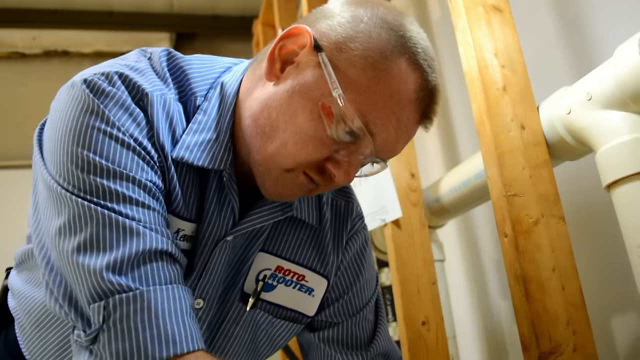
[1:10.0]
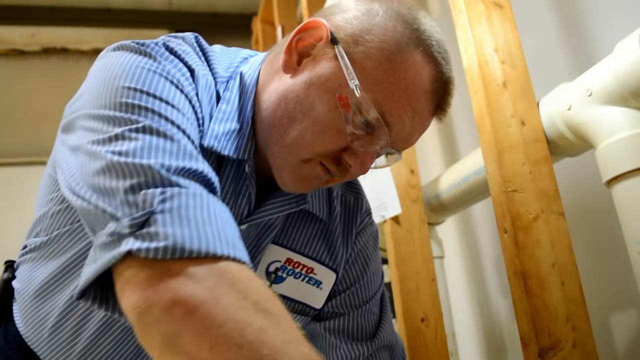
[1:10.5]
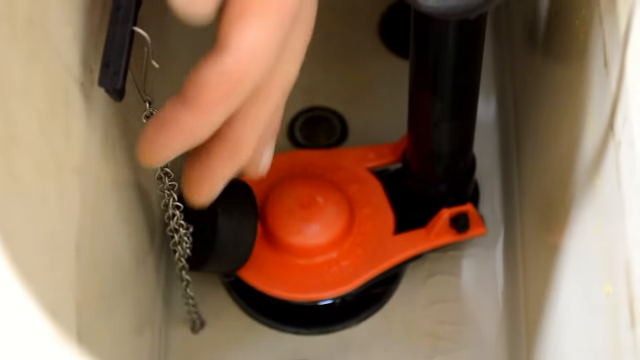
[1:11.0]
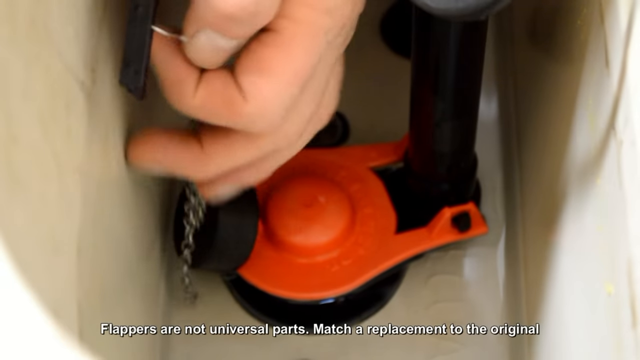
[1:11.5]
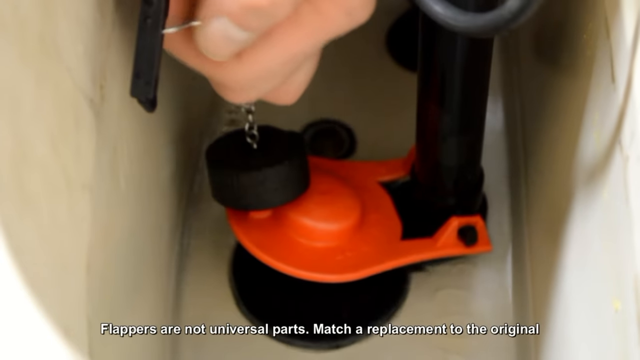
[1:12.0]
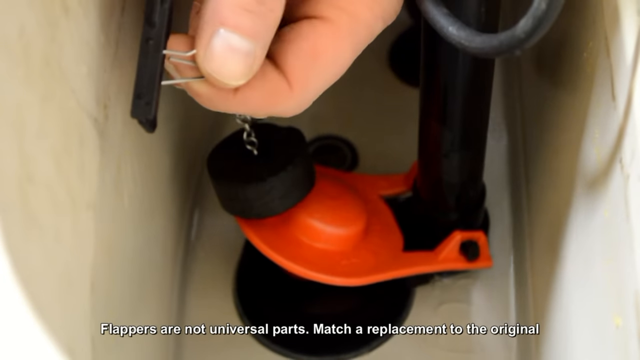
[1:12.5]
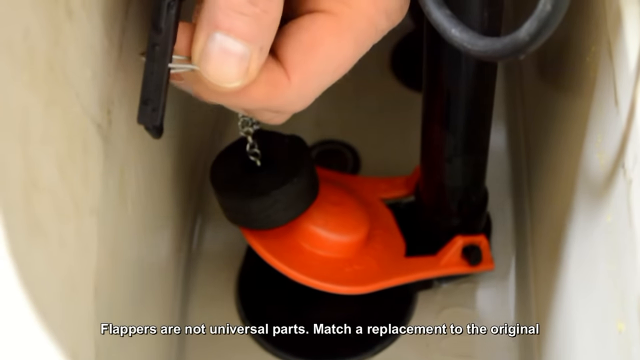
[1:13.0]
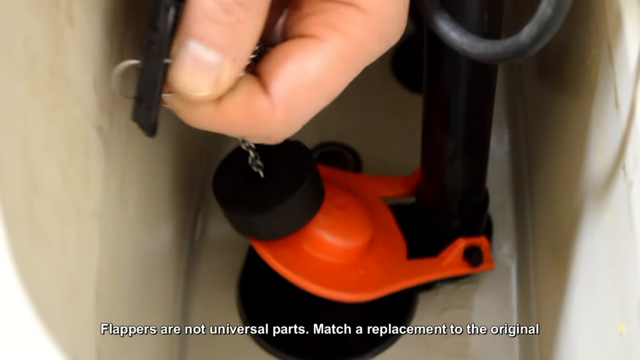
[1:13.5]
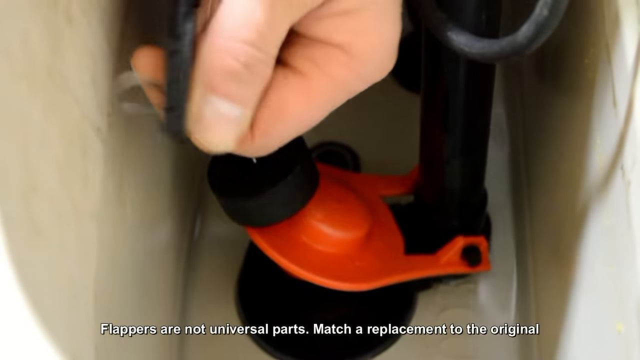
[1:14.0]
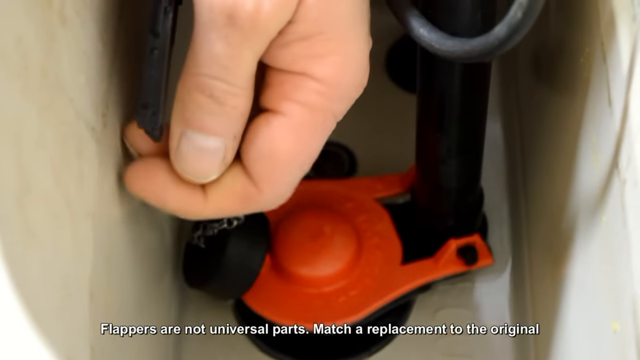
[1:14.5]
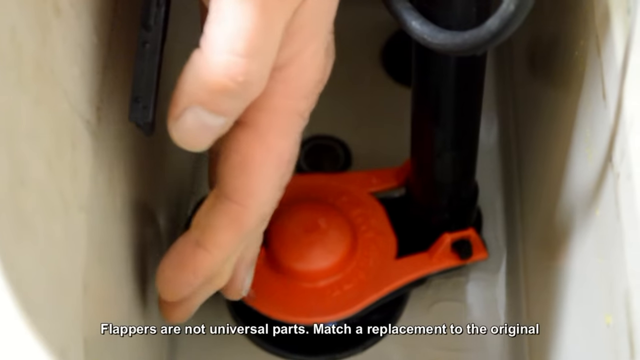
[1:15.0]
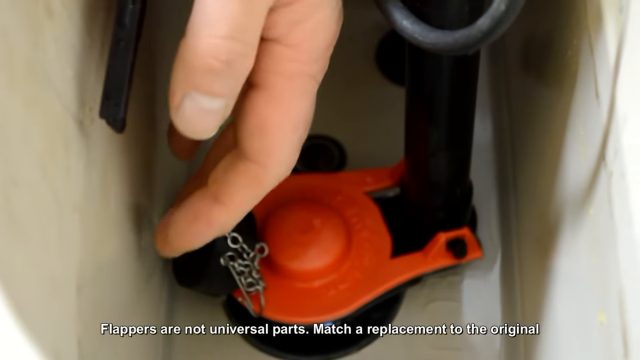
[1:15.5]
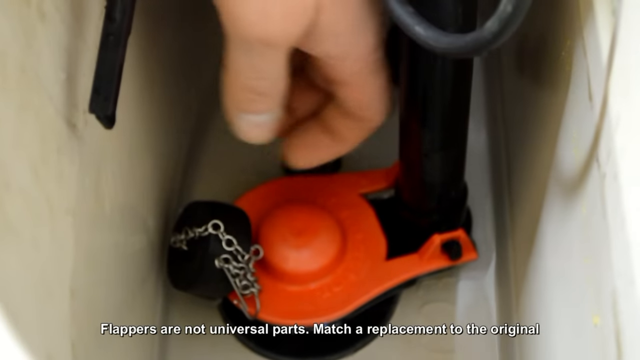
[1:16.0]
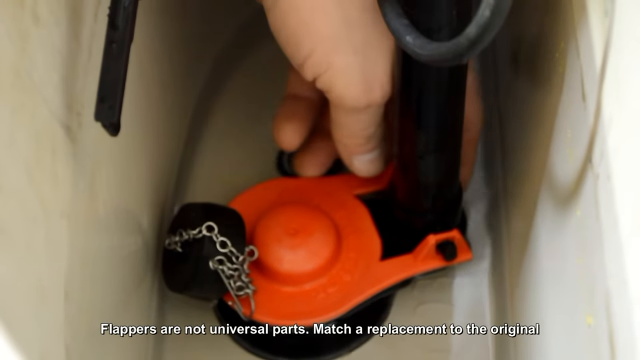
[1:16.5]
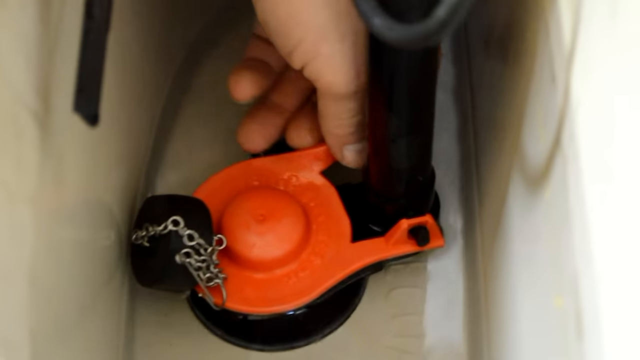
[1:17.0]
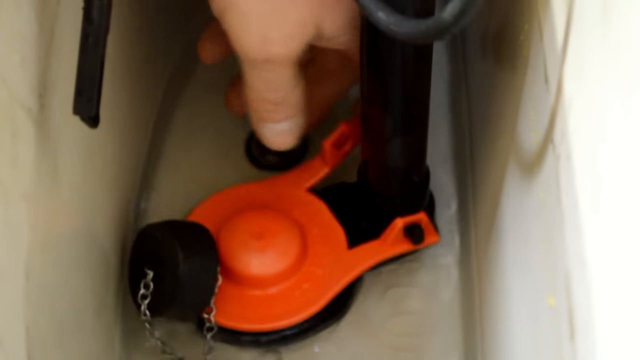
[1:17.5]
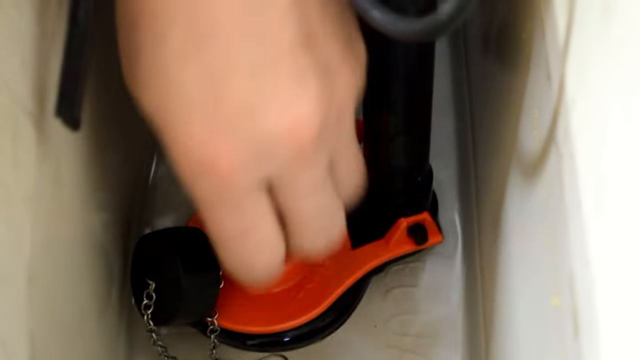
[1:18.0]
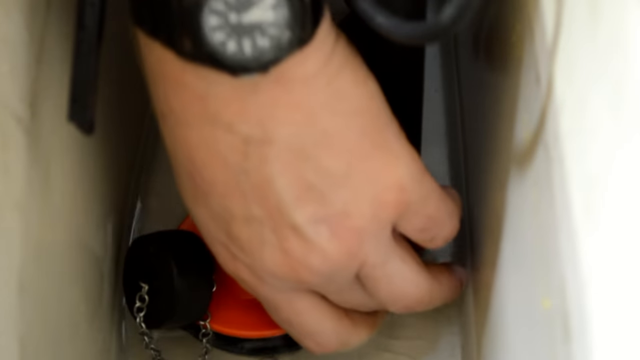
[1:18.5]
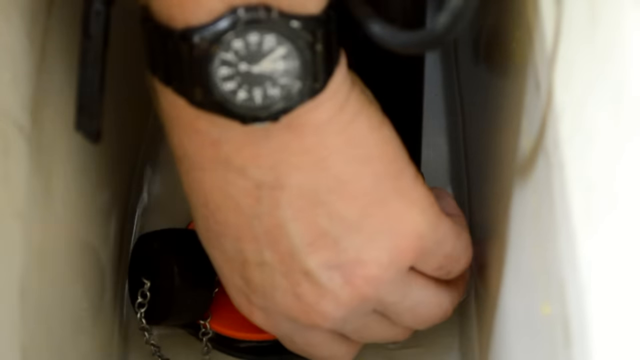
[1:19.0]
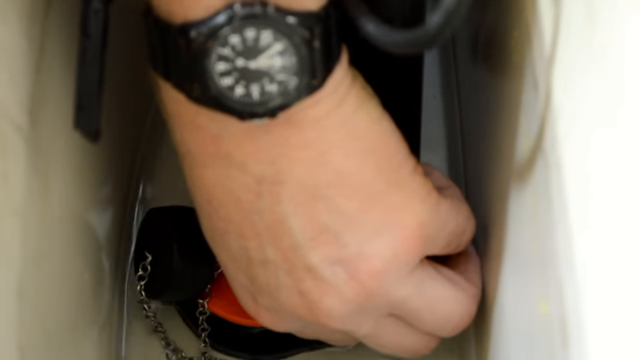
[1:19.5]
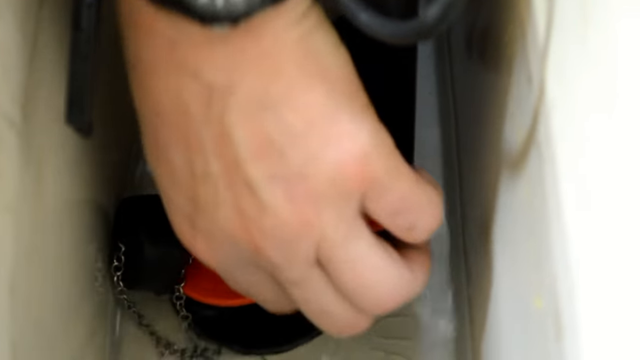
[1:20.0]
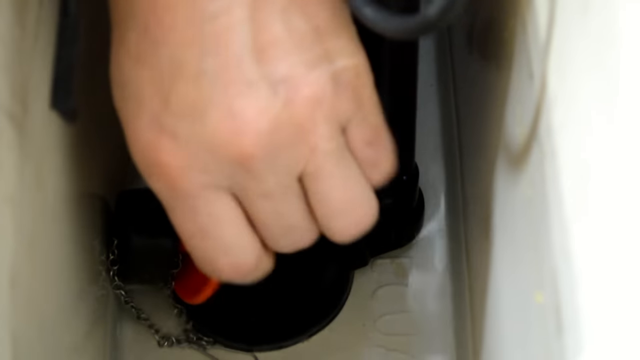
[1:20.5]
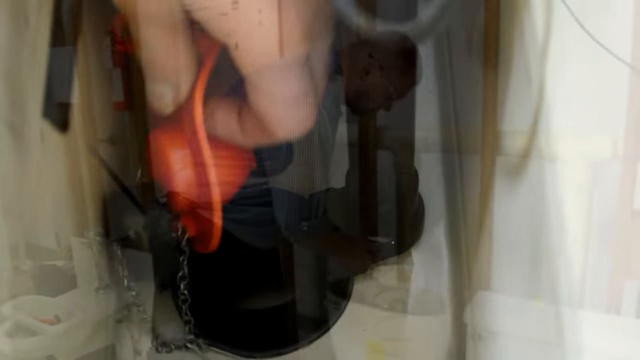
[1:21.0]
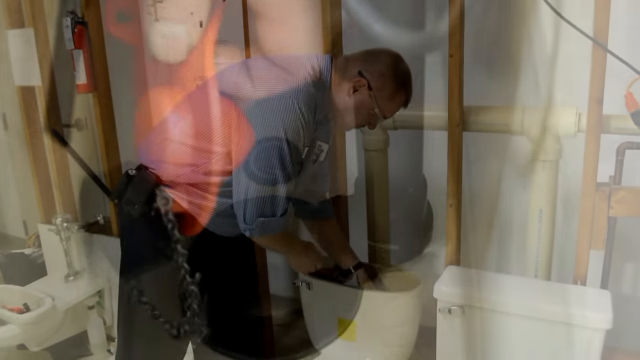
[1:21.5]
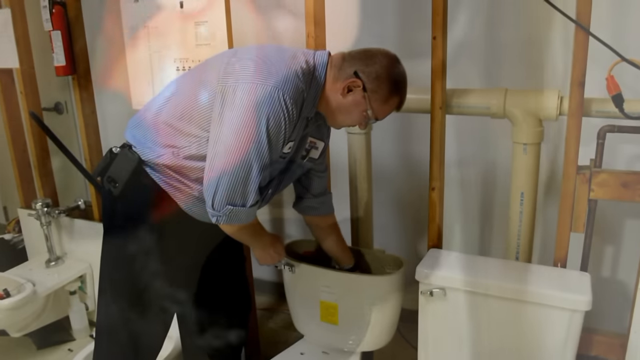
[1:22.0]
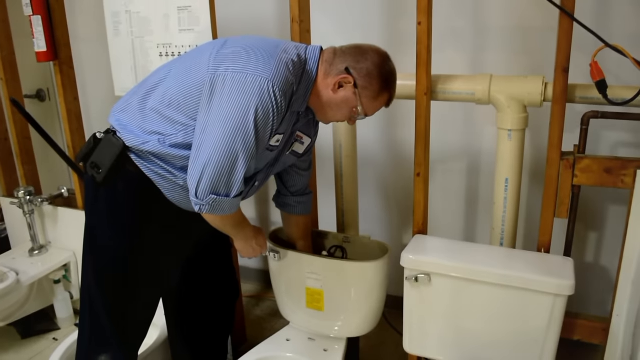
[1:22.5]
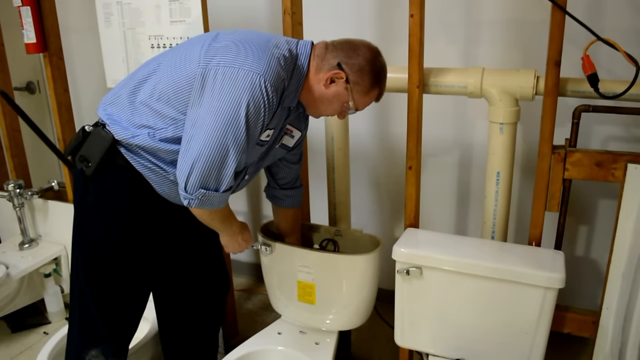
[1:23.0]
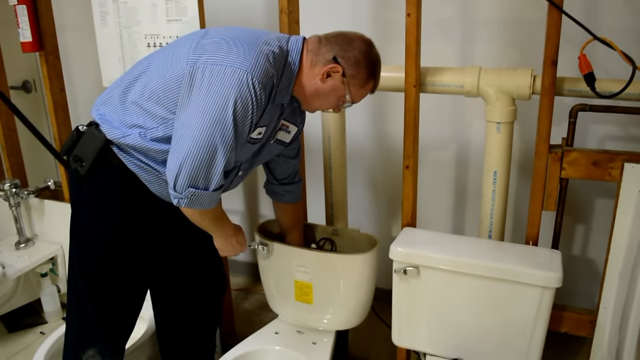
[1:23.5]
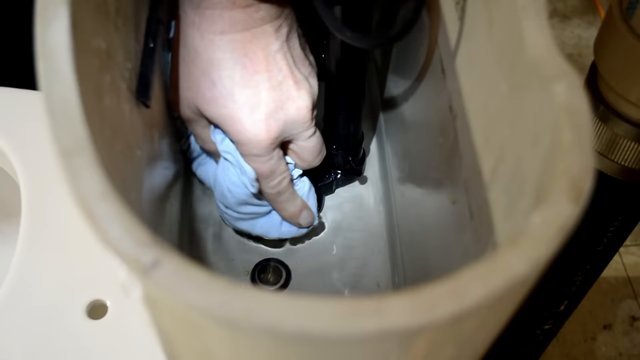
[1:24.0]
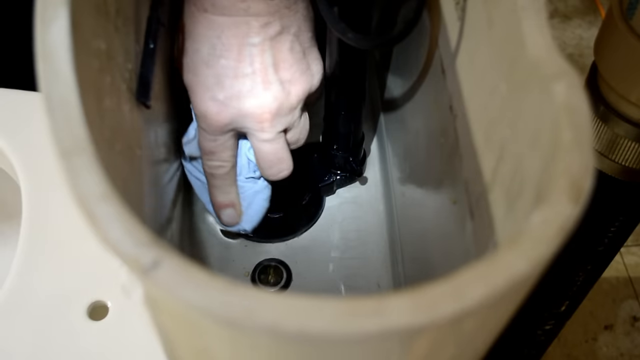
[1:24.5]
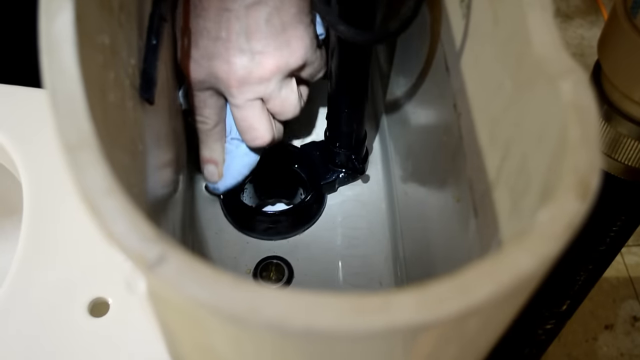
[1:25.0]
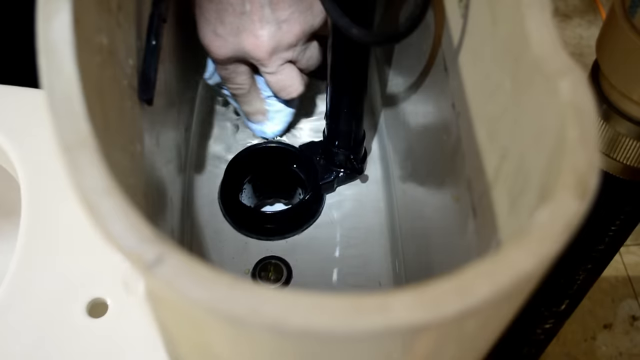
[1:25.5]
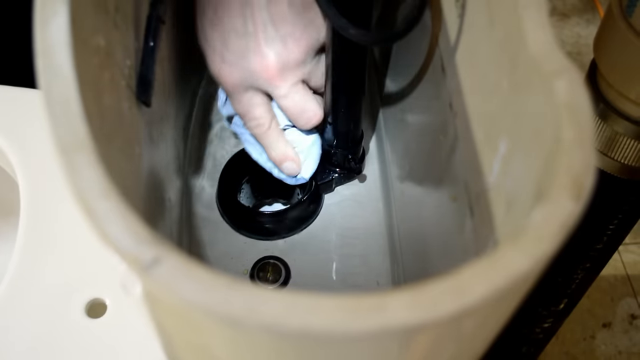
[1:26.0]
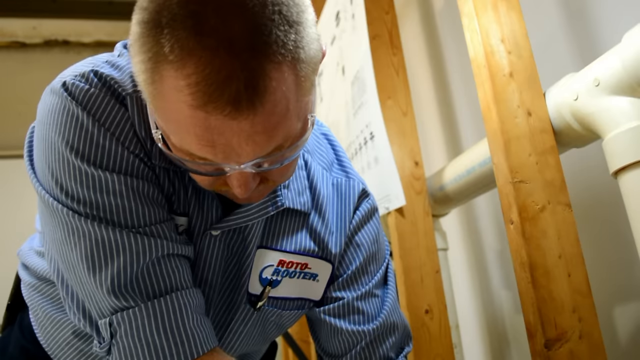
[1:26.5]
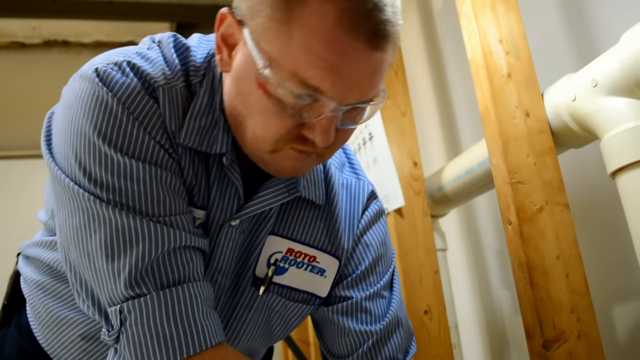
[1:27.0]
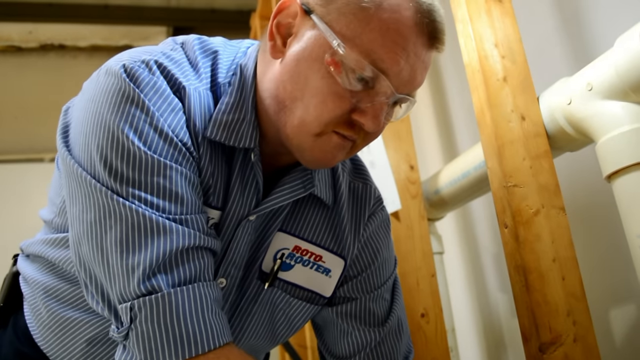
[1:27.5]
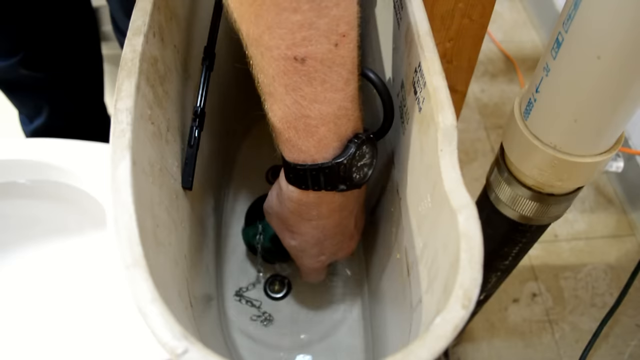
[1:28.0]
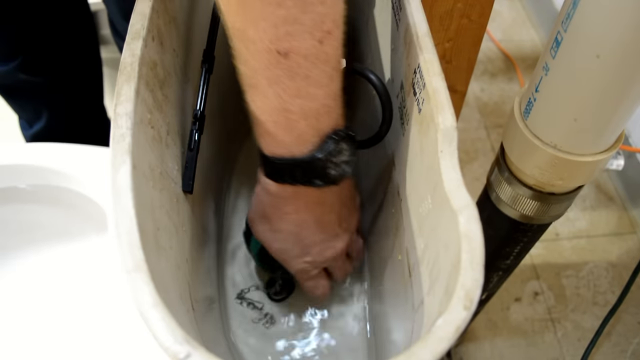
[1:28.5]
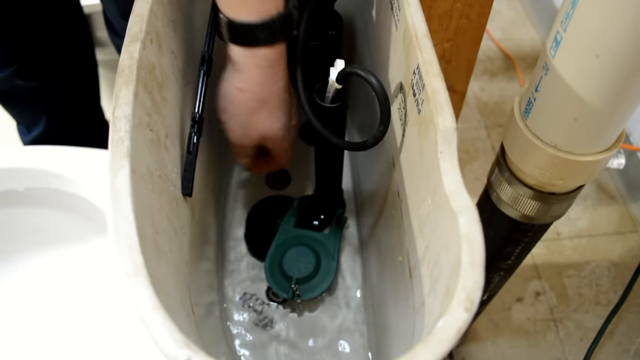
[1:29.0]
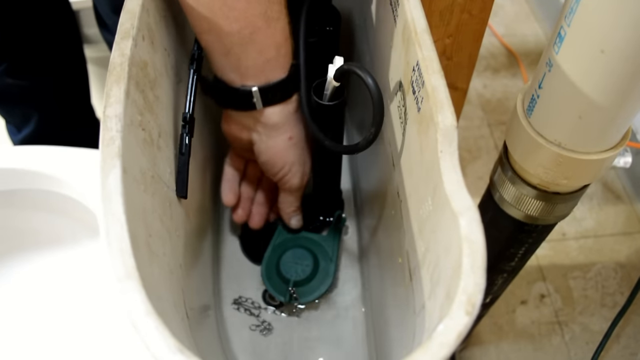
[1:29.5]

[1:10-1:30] After draining the toilet tank, the plumber pulls out the seal and removes it altogether, his hand handling it efficiently. There is no water inside because he has already closed the pipe that supplies the tank. He first cleans the place where the seal was, then puts in the new seal he had been holding, which is dark green. The inside of the toilet tank has some numbers and text written on it. Some cables are on the right side. The tile floor is visible and quite dirty. In the upper left part of the screen are the plumber's dark blue pants.